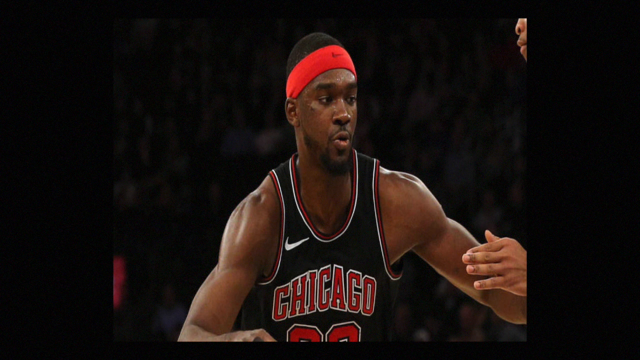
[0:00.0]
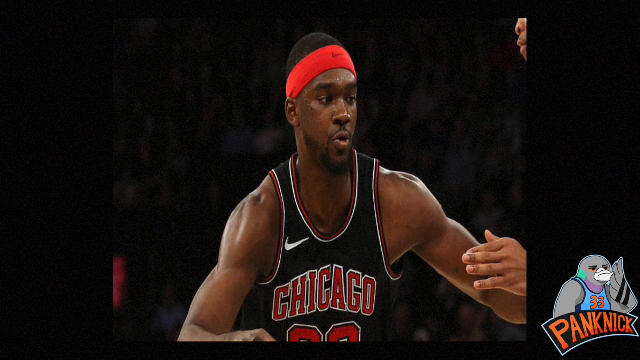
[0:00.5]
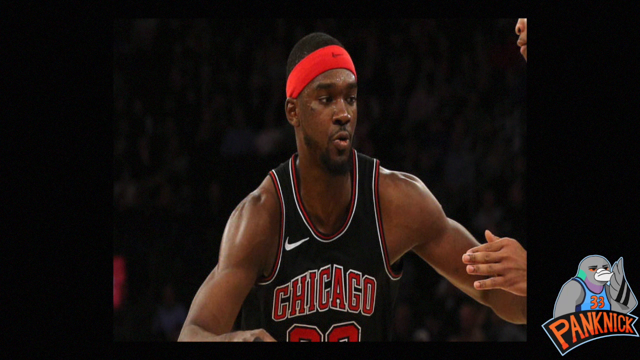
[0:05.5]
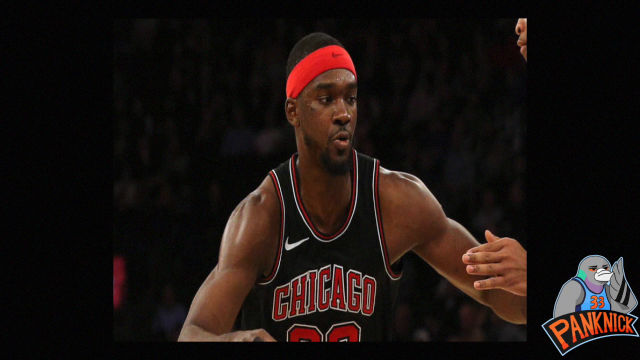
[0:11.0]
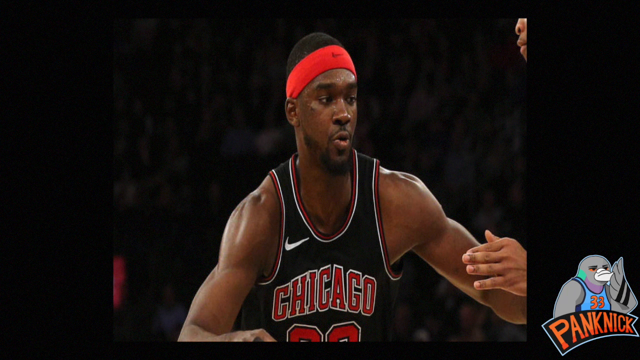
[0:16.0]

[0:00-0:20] What looks like a Chicago Bulls basketball player wears a black jersey with "Chicago" written in red with a white border, along with a red bandana. His right hand is kind of up. In the background, dimly lit people are in the stands, barely visible. In the bottom right corner is a cartoon-looking picture of what kind of looks like a pigeon wearing a blue jersey with the number 33 in orange, and the letters "P A N K N I C K", also in orange, on a black background with a blue border. At the top right of the picture is someone's face, apparently a player defending against the Chicago player.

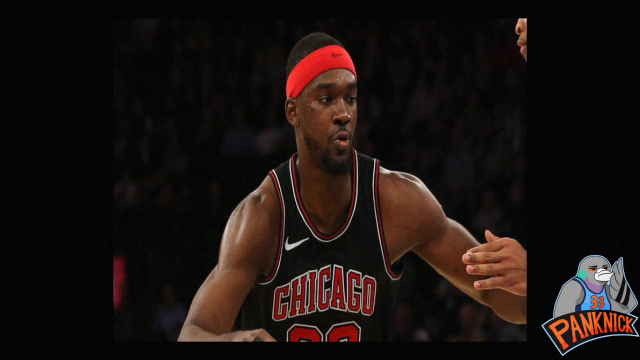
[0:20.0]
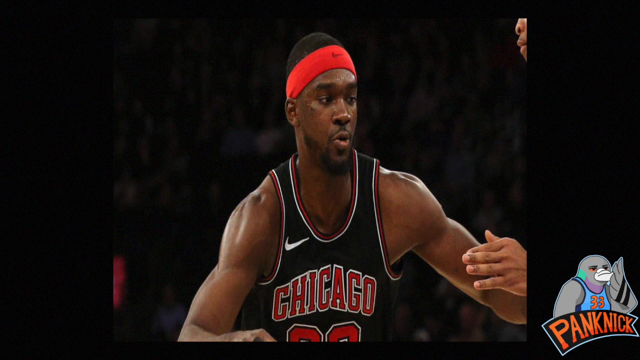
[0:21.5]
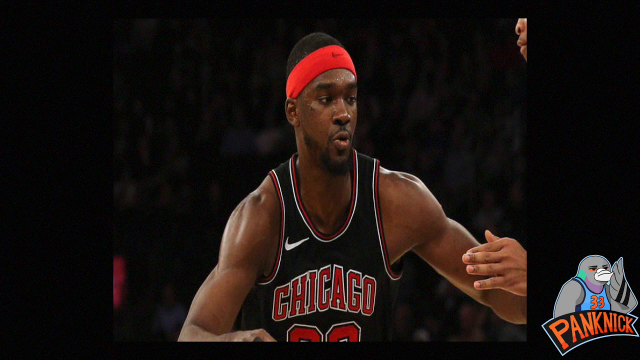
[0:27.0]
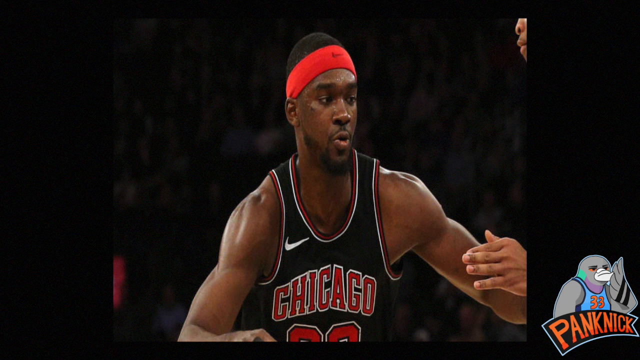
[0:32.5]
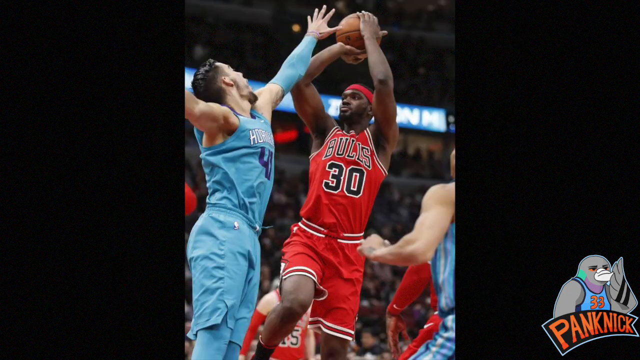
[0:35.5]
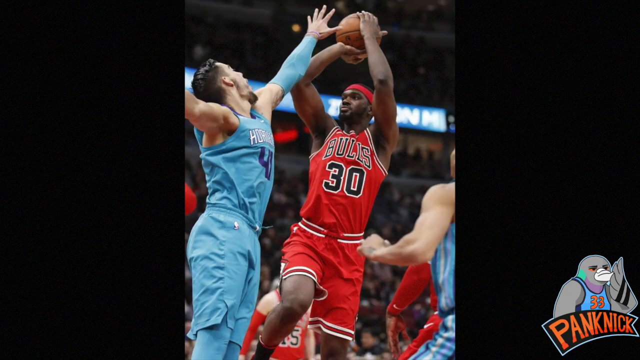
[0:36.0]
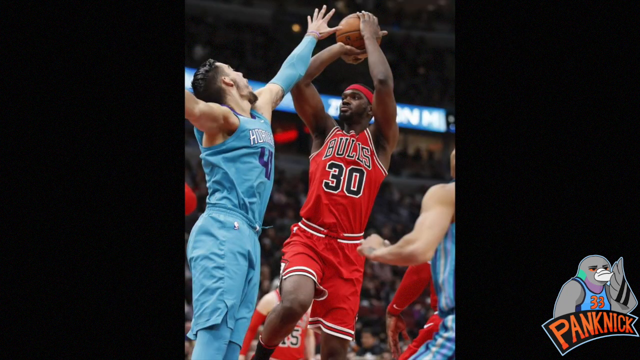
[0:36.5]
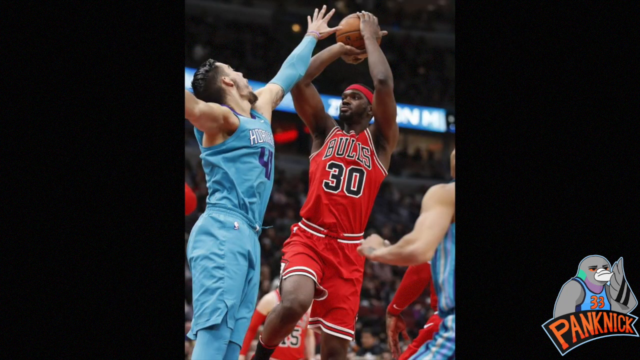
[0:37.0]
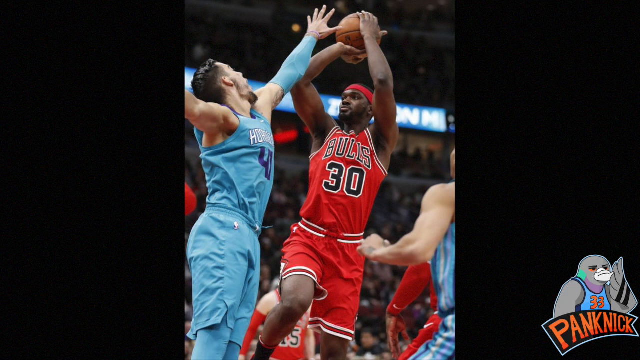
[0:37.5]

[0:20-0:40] An image shows a Chicago Bulls basketball player looking down with his eyes while his face is up. His left hand appears extended outward and his right hand seems to point more downward. He wears a black jersey with "Chicago" in red with a white border. The background is very dimly lit, showing the stands with barely visible people in them. At the top right, what looks like a defender guards the Bulls player; only the part of his face with the nose and mouth is visible, and one of his hands sticks out at the bottom left of the image. At the bottom right is what looks like a gray pigeon wearing a blue jersey with the number 33 in orange, and beneath it the letters "p-a-n-k-n-i-c-k" in orange on a black background with a blue border.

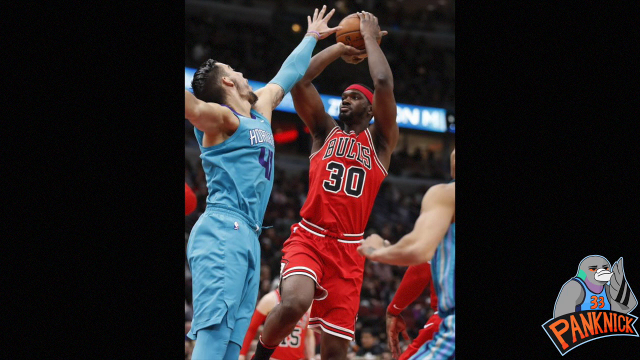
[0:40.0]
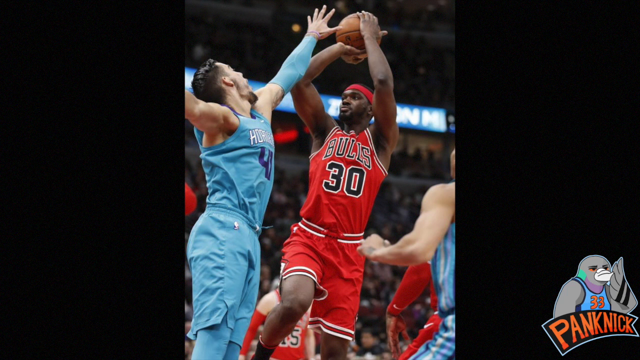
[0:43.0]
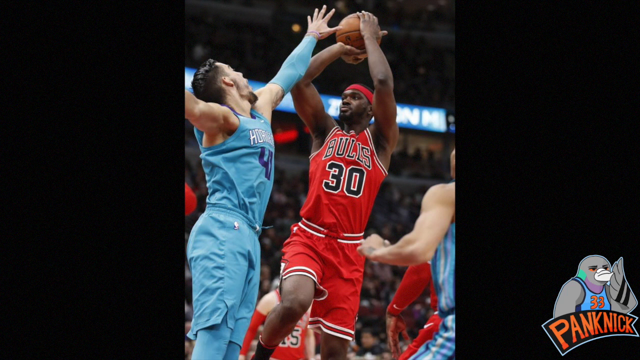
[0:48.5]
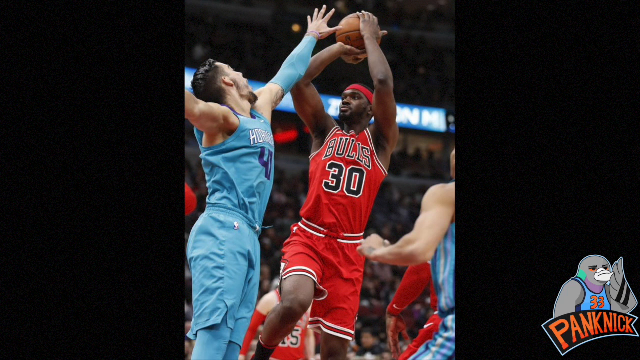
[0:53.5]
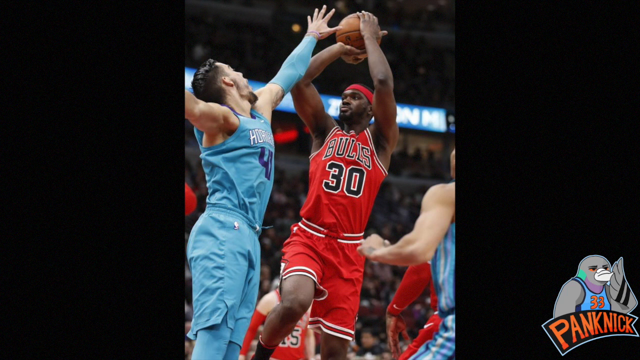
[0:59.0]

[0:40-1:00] An image from a basketball game shows a player in a red Chicago Bulls jersey with "Bulls" written on the front in black with a white border, and the number 30 underneath in black with a white border. He is kind of leaning back in a fadeaway position, his right knee kind of bent and his left leg straight, palming the basketball with his right hand with the elbow bent while his left hand holds the other side of the ball. In front of him, a Hornets player in a light blue jersey jumps up, trying to block with his left hand, fingers extended; his right arm is also extended outward but cropped by the image. Another person on the right side seems to be standing and looking at the player shooting the fadeaway, his elbows kind of bent. Fans sit in the stands in the background. Completely black borders run along each side of the image, and in the lower right corner is a cartoon image of a gray pigeon.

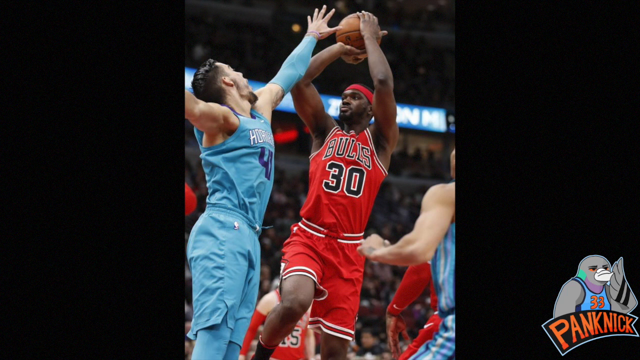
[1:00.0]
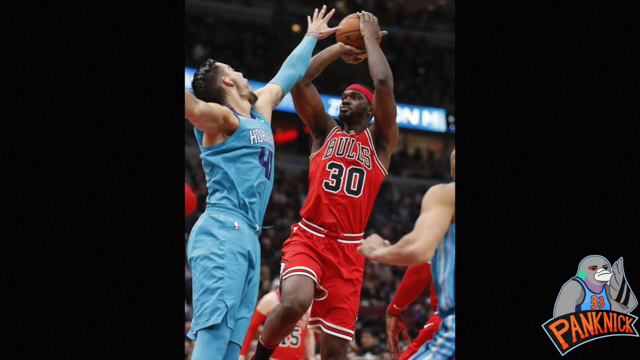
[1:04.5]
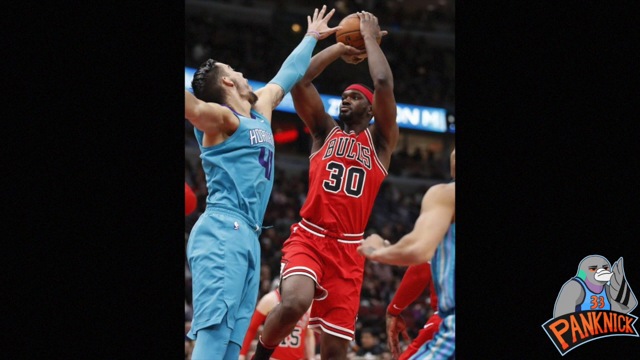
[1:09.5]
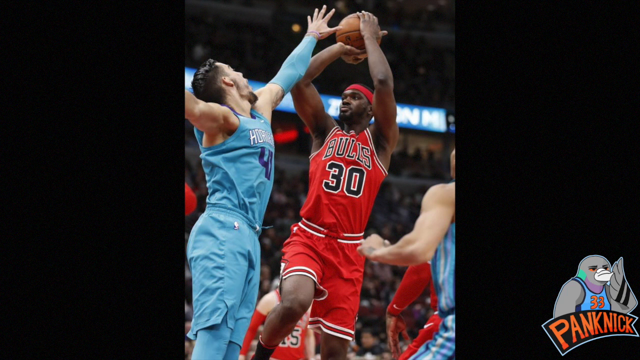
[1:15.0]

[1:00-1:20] A Chicago Bulls player jumps up doing a fadeaway in a red uniform, with "Bulls" in black text with a white border and 30 underneath with a white border. He palms the basketball with his right hand, elbow bent, while his left hand holds the other side of the ball. His right knee is bent a little and kind of up in the air, while his left knee is straighter and he is kind of leaning on that foot. A Hornets player in a light blue jersey has also jumped up, his left hand trying to block the ball with fingers extended and his right arm extended outward, kind of cropped by the picture. People are in the stands in the background. In the lower right corner, another Hornets player stands with his left elbow bent, watching the fadeaway. In the lower right corner of the screen, a gray pigeon wears a blue jersey with the number 33 in orange, with text in orange on a black background with a purple border. The sides of the basketball image are black on the left and the right.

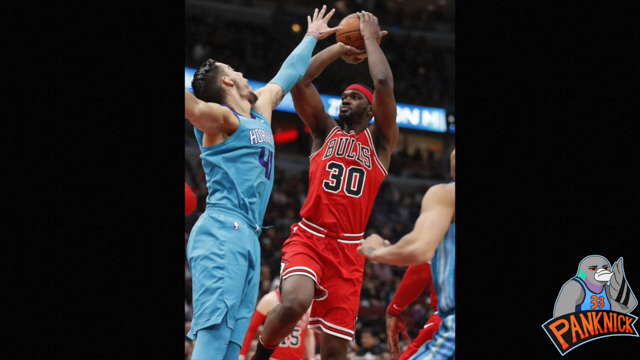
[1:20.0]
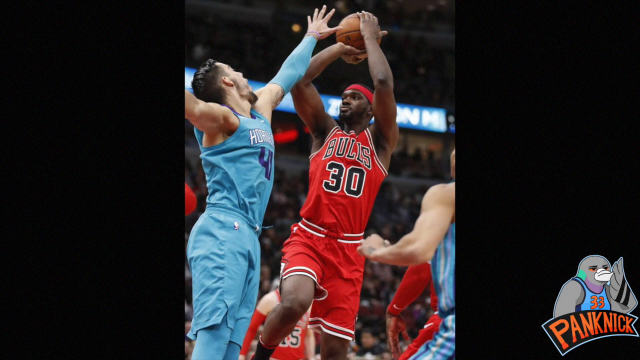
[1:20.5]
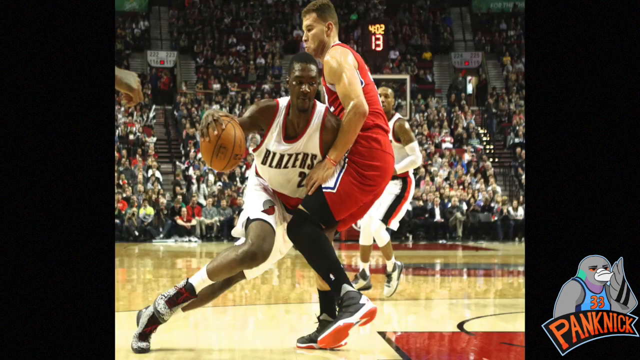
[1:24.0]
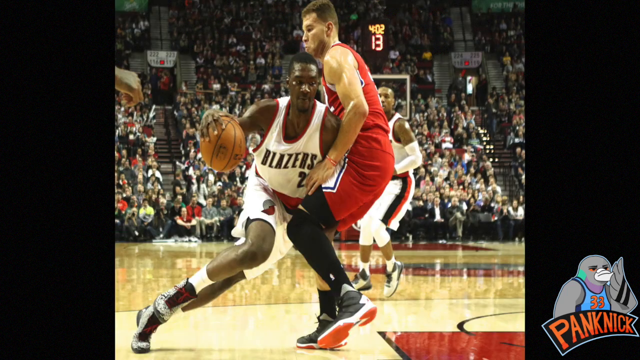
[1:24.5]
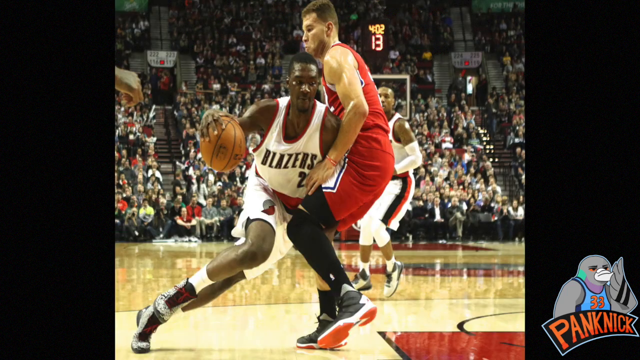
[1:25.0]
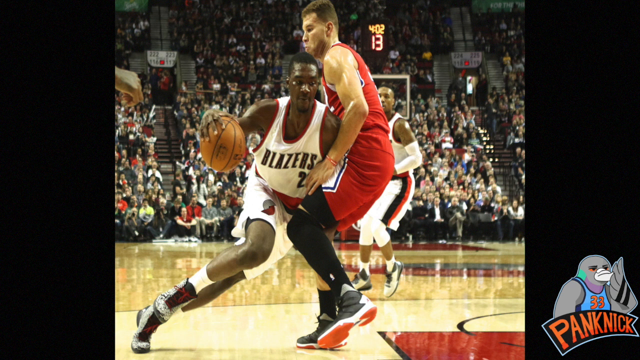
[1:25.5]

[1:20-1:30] A basketball player in a Bulls jersey shoots a fadeaway while a defender in a Hornets jersey jumps up trying to block it. It then cuts to another image of a player in a white Blazers jersey holding a basketball with his right hand; he almost seems to be leaning sideways against a defender in a red jersey, who kind of has a black brace running from his knee all the way down to his ankle and is trying to defend against the Blazers player. The basketball court is visible all the way to where it ends and the stands begin, with a whole bunch of fans in the stands. The picture is cropped on both the left and right with a black background. On the lower right side of the screen is a gray pigeon in a blue jersey with the number 33 in orange, and in front of it text reading like "panic" with the "nick" spelled with a k, in orange on a black background with a blue border.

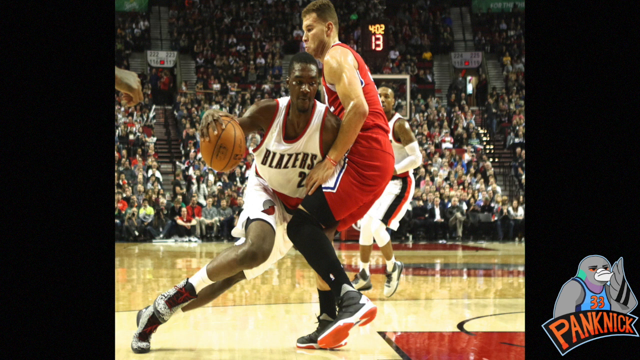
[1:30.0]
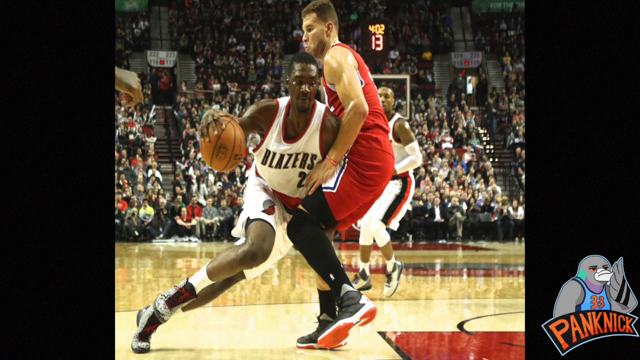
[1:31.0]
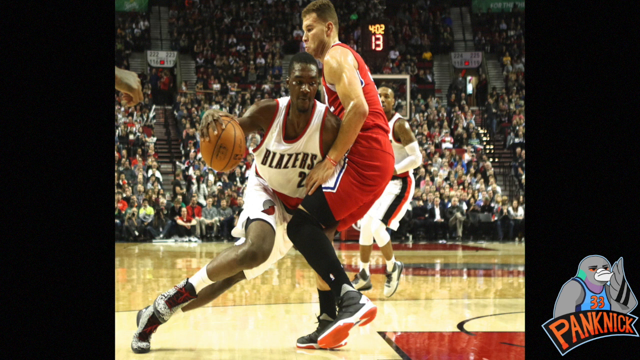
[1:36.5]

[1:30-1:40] An NBA player dribbling the ball leans on a defensive player who wears a red jersey and red shorts. The dribbler wears a white Blazers jersey with red trim and "Blazers" on it in black. The picture is cropped on the left and right with a black background. In the background of the picture, another Blazers player looks at the play, and a shot clock reads "13" with "402" above it. Behind that, everybody is in the stands and every seat looks full. The court has kind of a light brown wooden color with some paint that is kind of red and black.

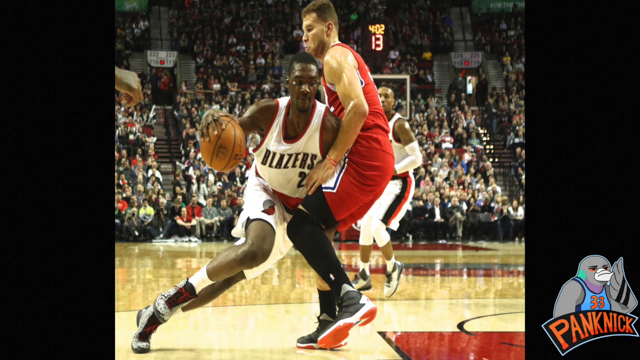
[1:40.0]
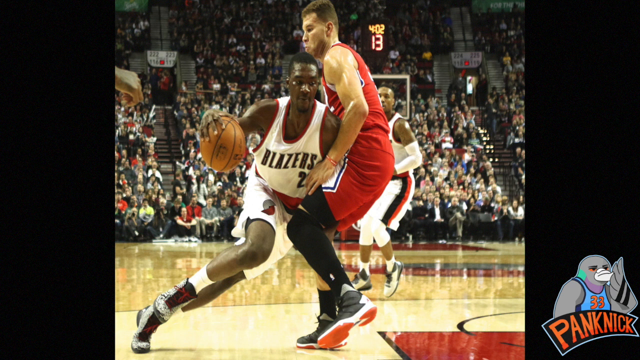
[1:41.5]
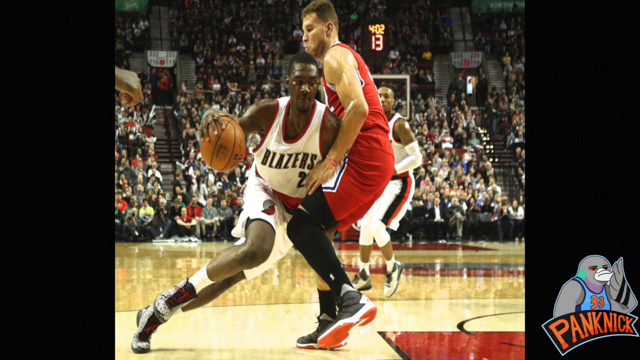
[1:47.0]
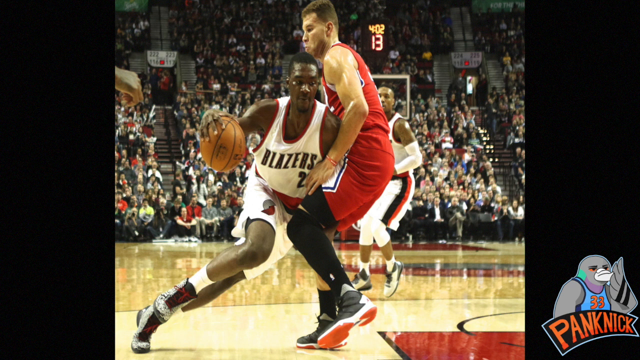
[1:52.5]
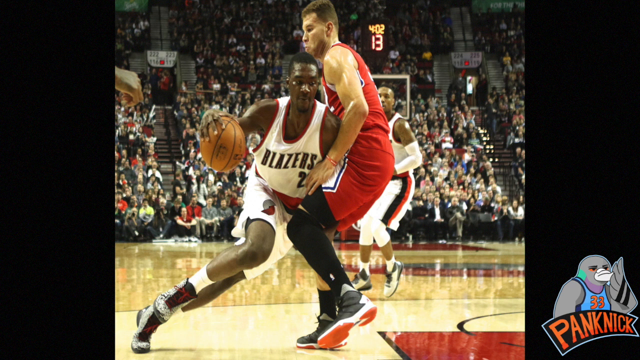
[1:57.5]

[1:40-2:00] A basketball player in a Blazers jersey dribbles the ball. "Blazers" is written on the front in black, and the jersey is white with red trim, as are the shorts. He seems to be leaning into a defender with his left shoulder. The defender, in a red uniform, kind of has his knees bent and wears a brace extending from his knee all the way down to his ankle as he defends the Blazers player. Behind them, another Blazers player in the background stares at the play, and behind that the stands look fully occupied with fans. The shot clock reads "13" and above it is "4-2", which seems to be the time remaining in the period or quarter. On the lower right side of the image is a gray pigeon in a blue jersey with the number 33 in orange, and text reading like "panic" spelled with a k, in orange on a black background.